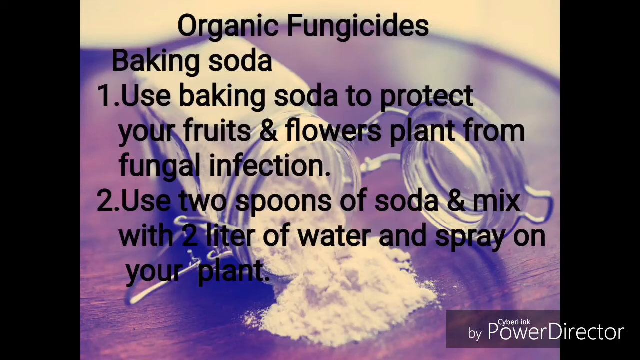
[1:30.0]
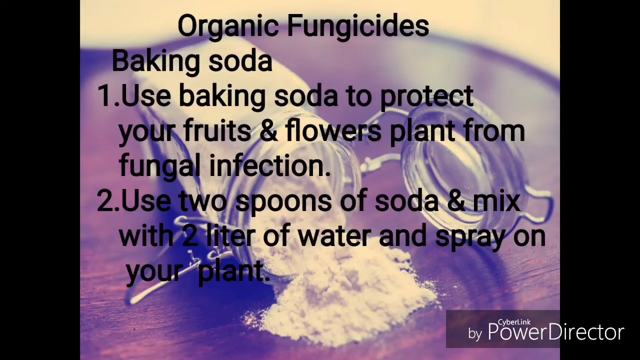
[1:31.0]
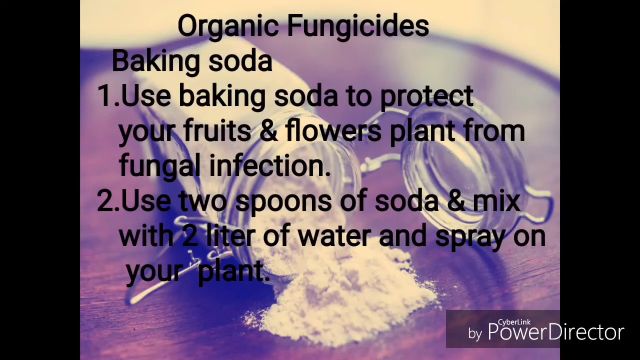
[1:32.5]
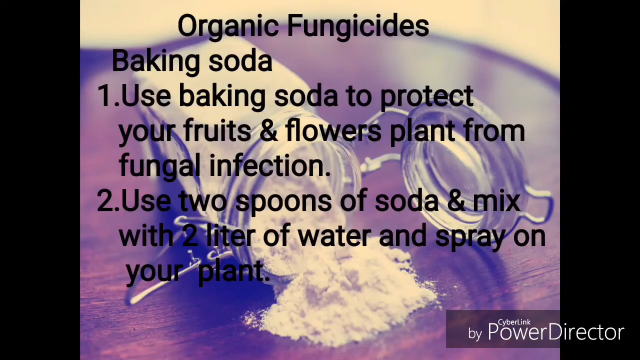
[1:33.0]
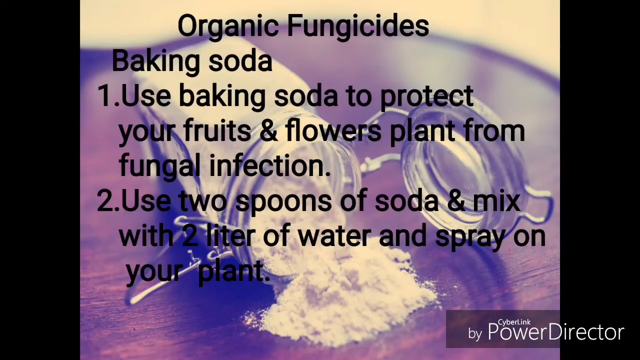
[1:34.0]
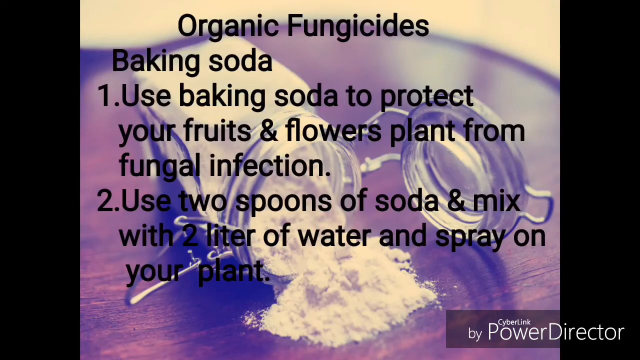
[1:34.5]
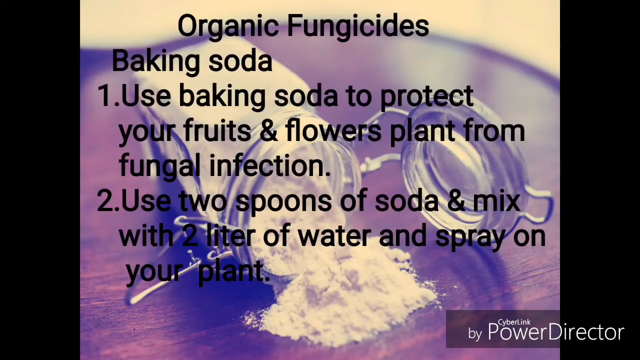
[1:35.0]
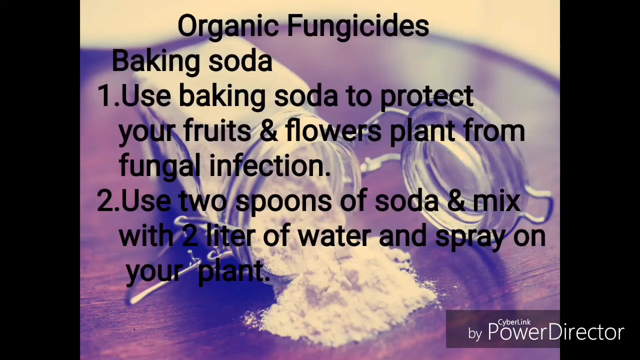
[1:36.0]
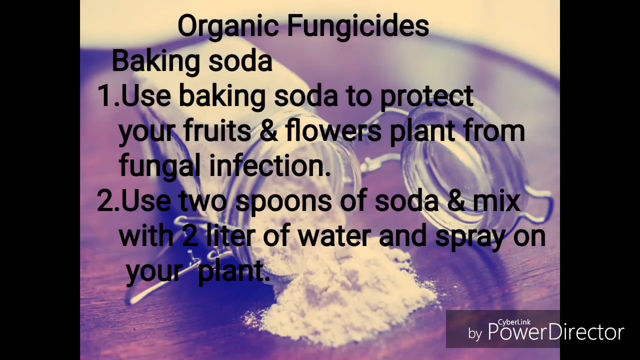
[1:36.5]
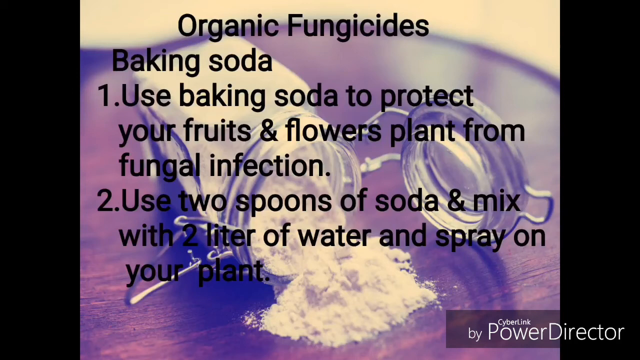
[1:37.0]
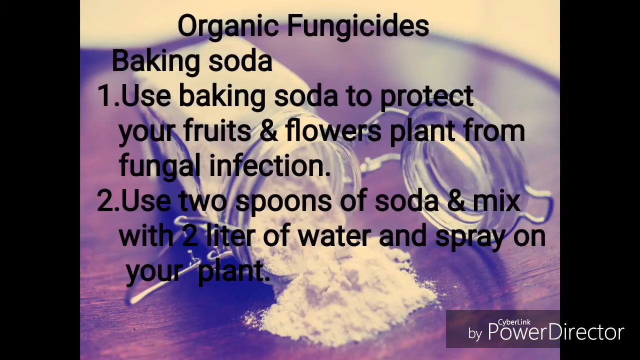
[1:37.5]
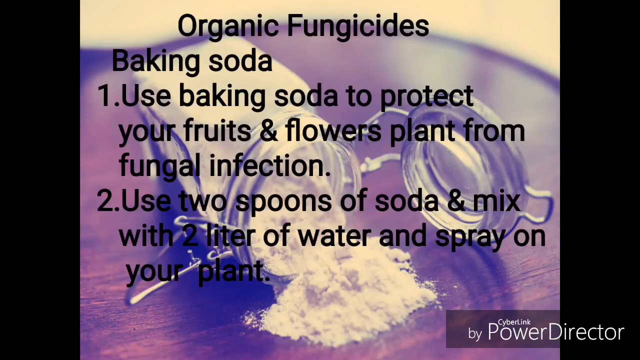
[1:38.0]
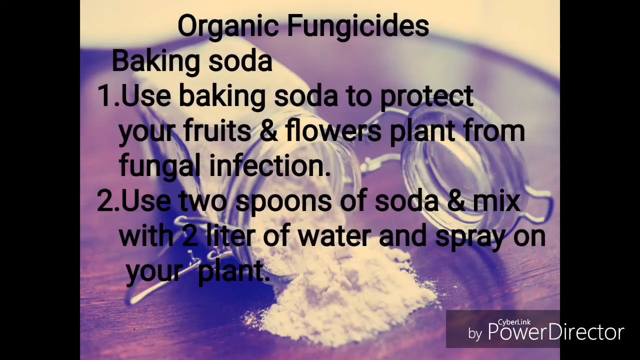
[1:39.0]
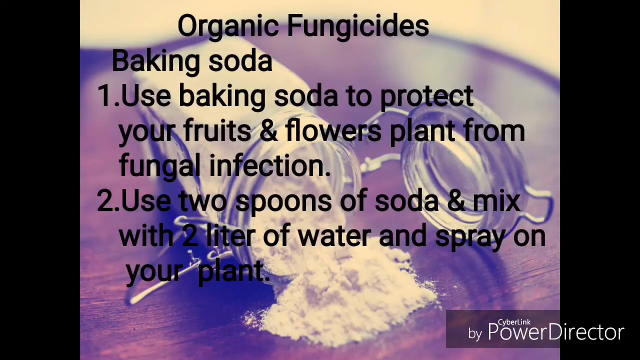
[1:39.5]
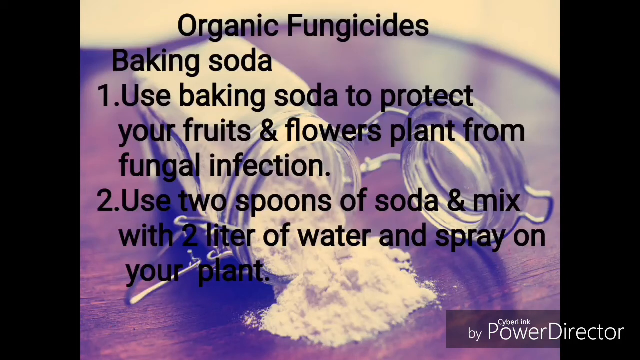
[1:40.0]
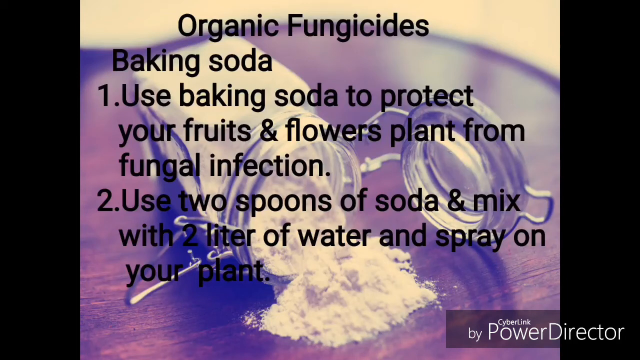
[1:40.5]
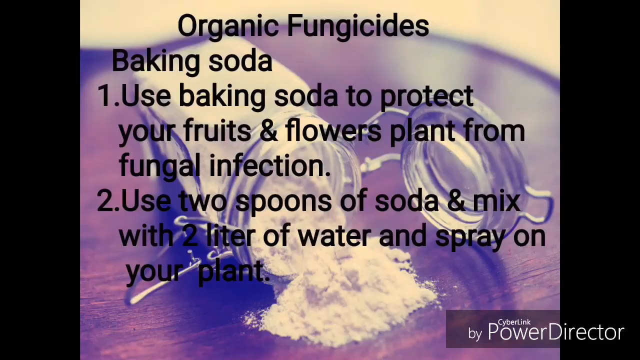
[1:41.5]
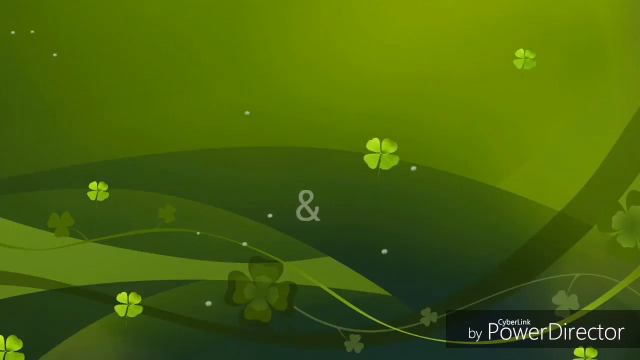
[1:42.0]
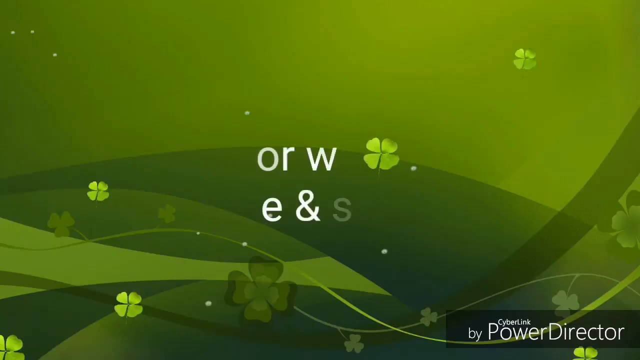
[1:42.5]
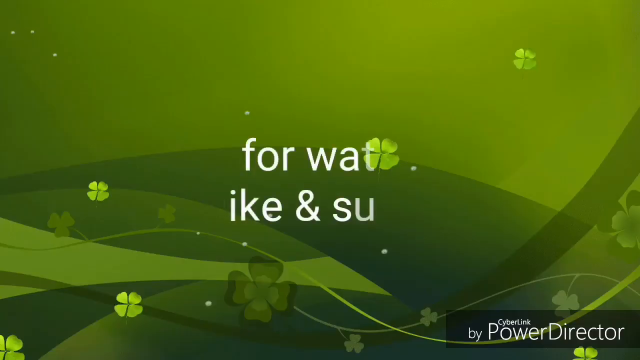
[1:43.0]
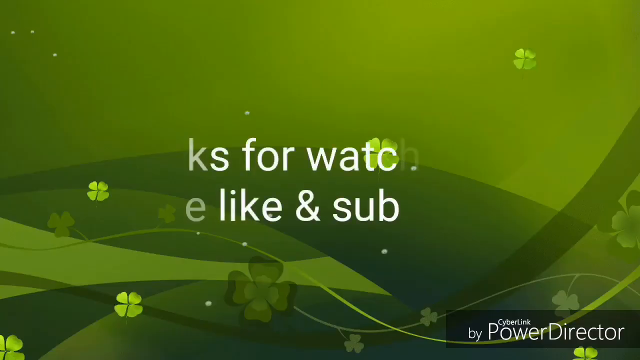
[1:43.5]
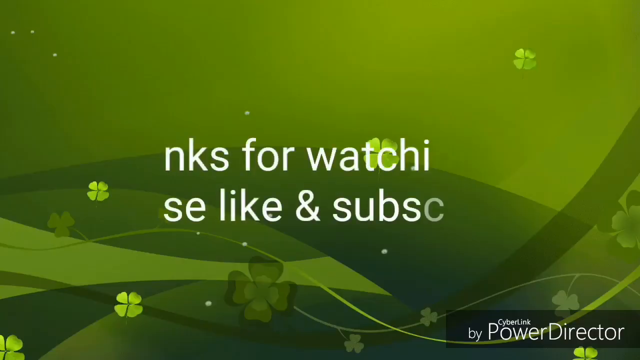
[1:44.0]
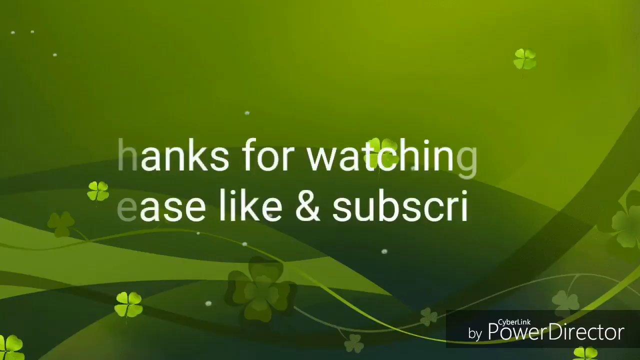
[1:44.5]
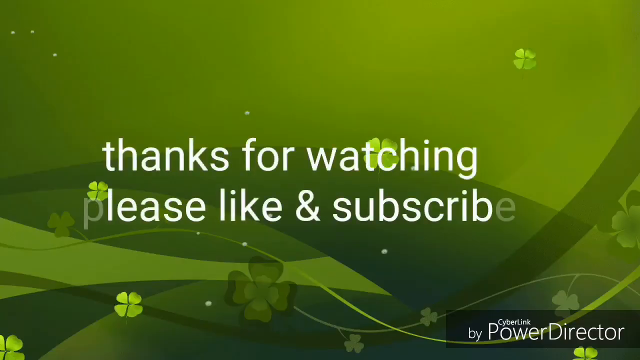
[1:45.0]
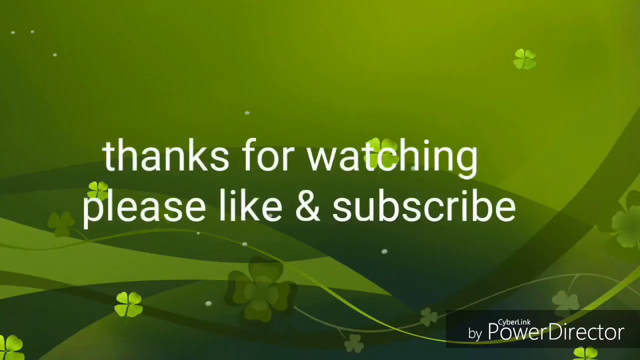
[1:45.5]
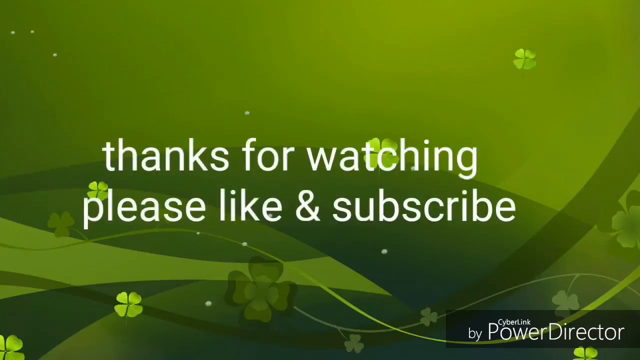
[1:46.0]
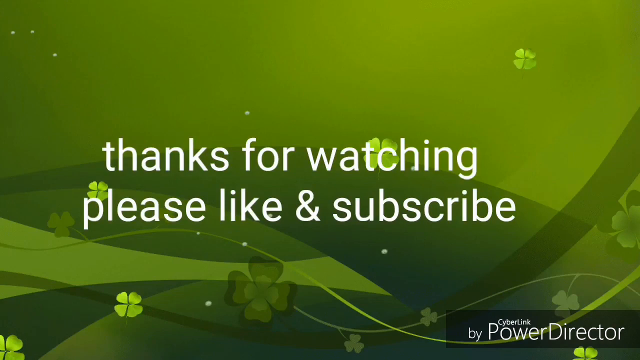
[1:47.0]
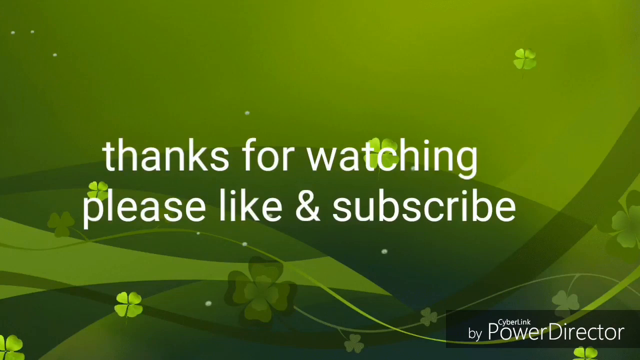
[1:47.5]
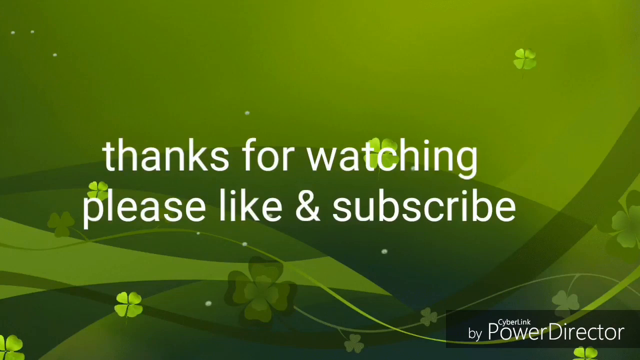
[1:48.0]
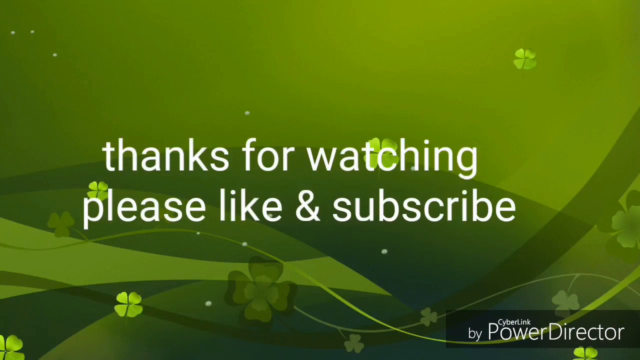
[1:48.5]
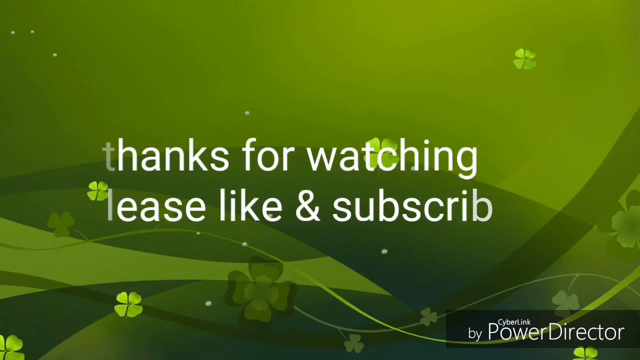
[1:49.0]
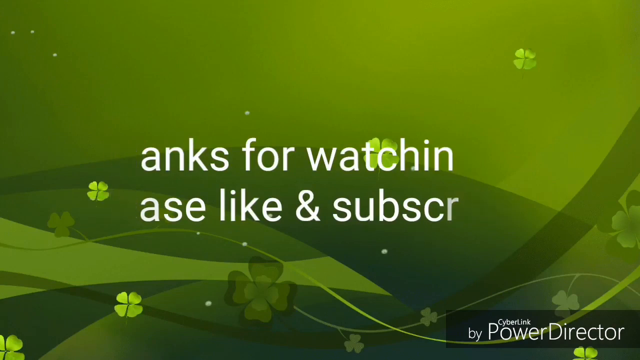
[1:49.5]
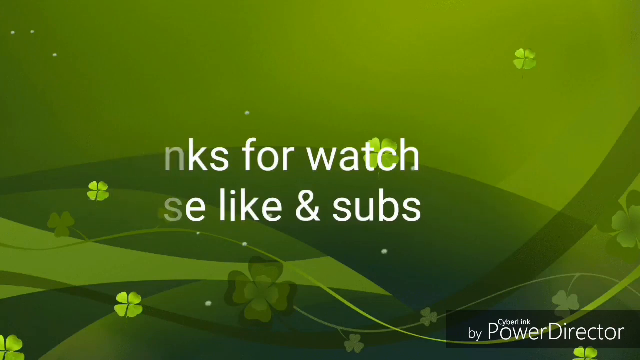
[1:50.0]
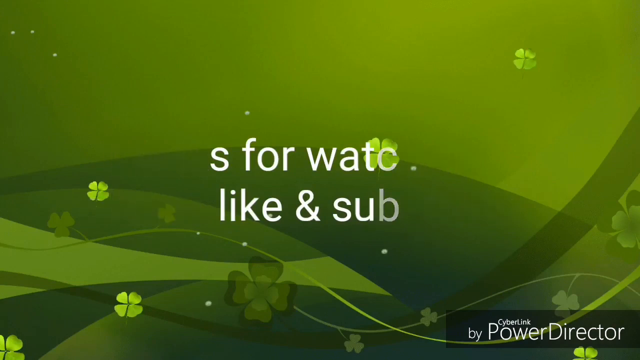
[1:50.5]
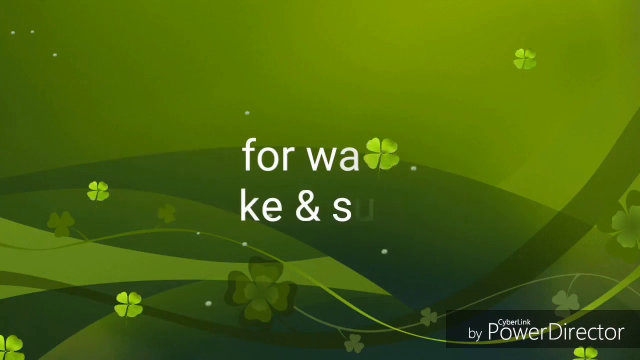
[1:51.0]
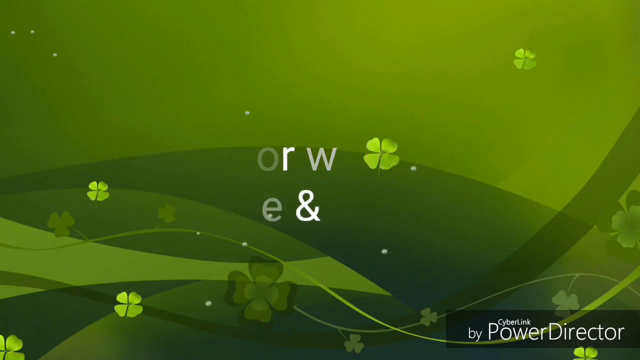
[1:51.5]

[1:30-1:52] The image stays for 13 more seconds. Then a green screen in different shades of green appears, with four-leaf clovers dotted around it and swirly patterns. The words "thanks for watching, please like and subscribe" appear in the centre in white font with no capital letters, not even at the start of "thanks". In the bottom right corner are the words "CyberLink by PowerDirector". The writing fades in and then fades out, leaving just the green background with the four-leaf clovers and the pattern. The text takes up about one third of the screen area and is located in the centre, so the top and bottom sections show only the background image.